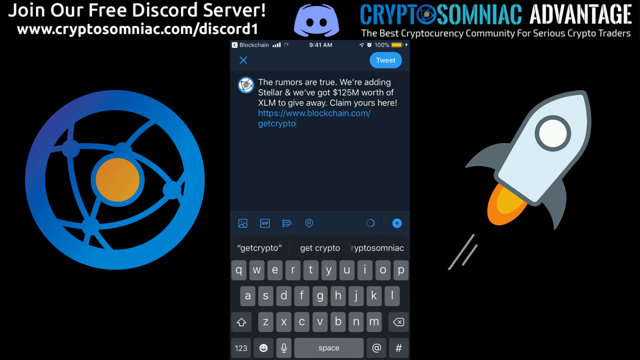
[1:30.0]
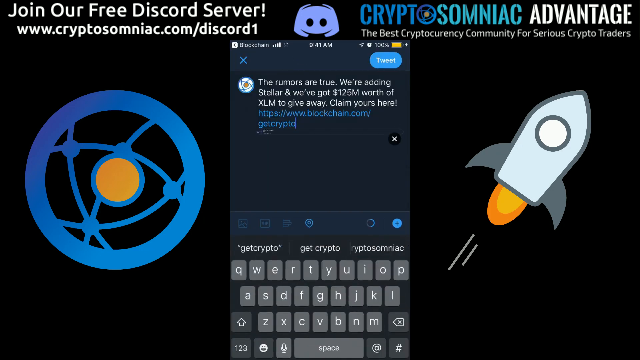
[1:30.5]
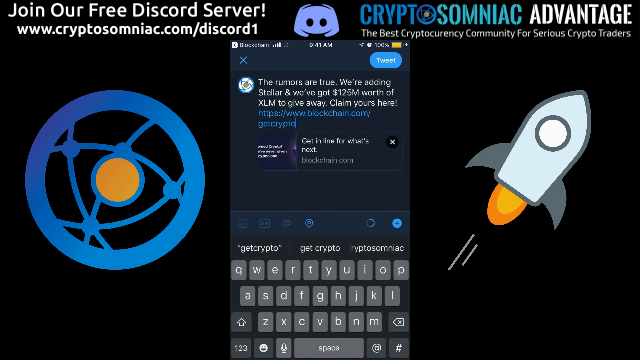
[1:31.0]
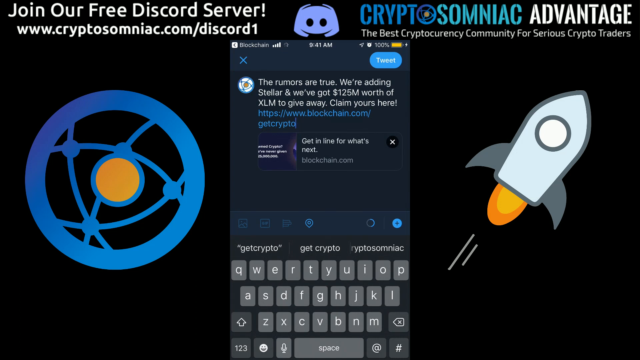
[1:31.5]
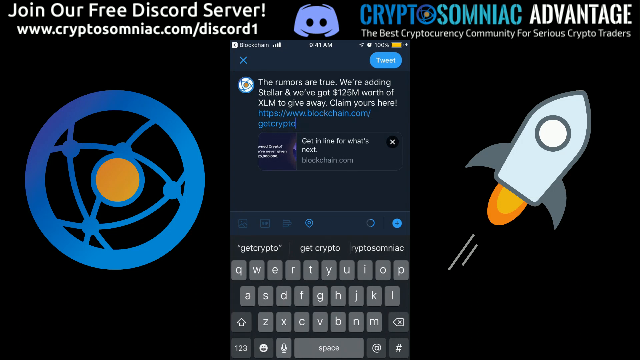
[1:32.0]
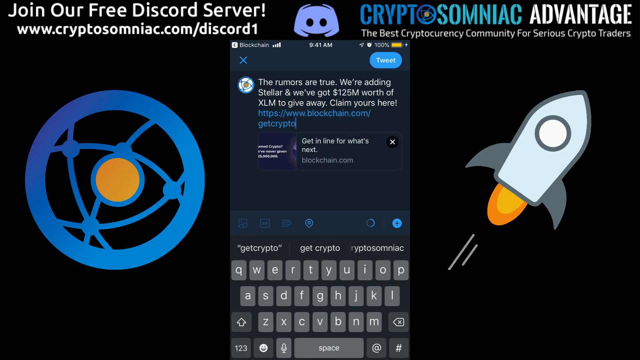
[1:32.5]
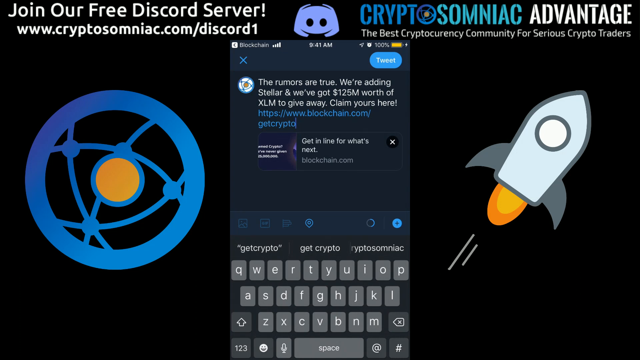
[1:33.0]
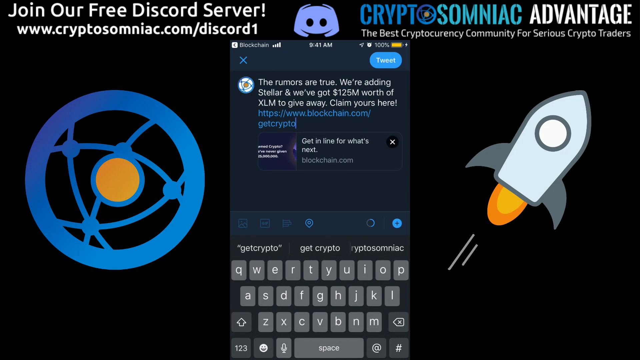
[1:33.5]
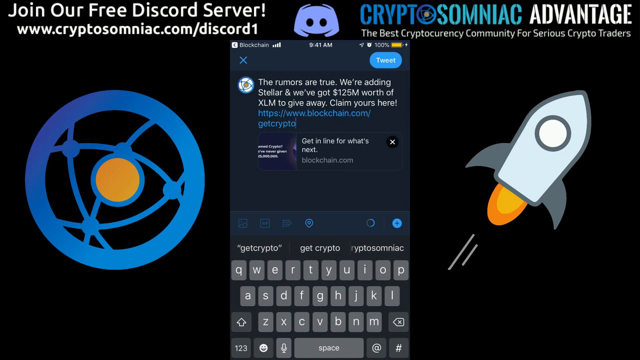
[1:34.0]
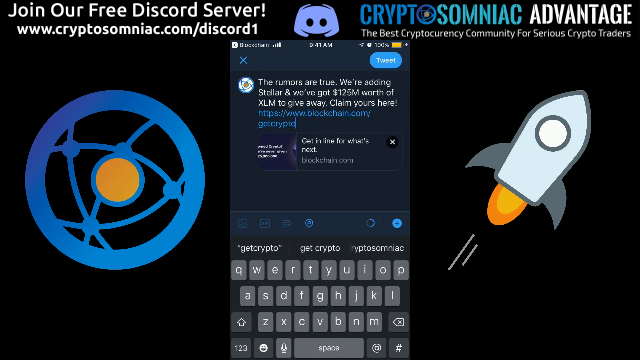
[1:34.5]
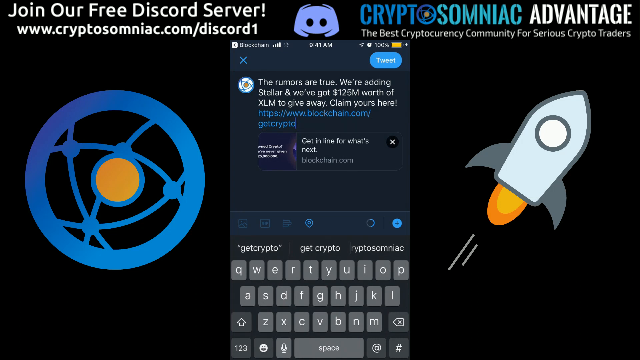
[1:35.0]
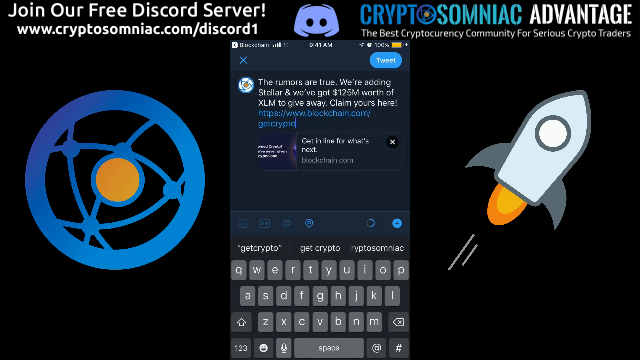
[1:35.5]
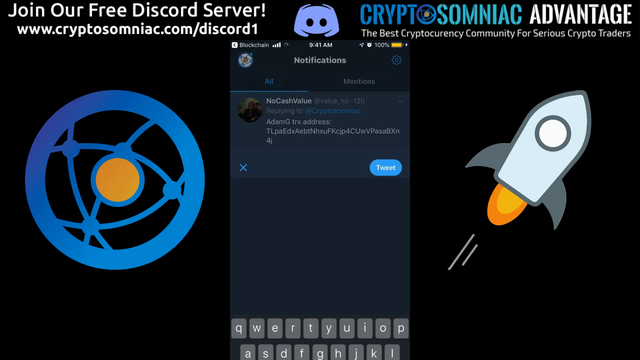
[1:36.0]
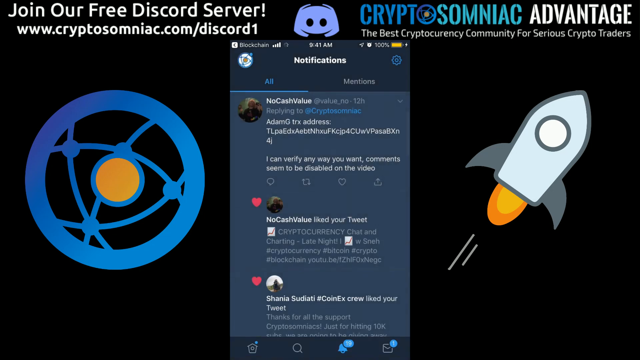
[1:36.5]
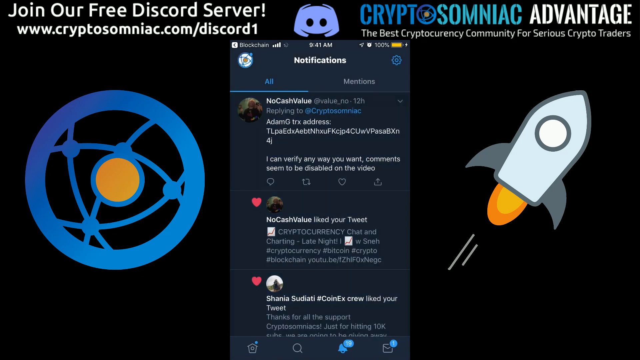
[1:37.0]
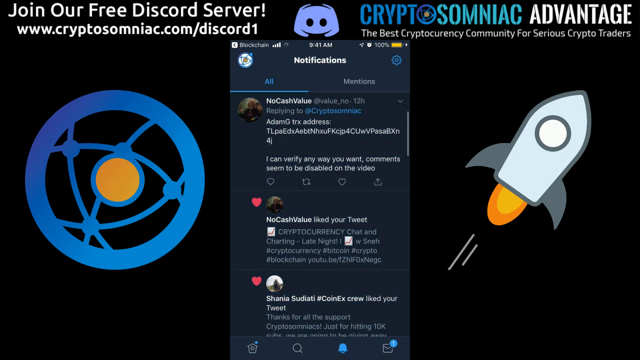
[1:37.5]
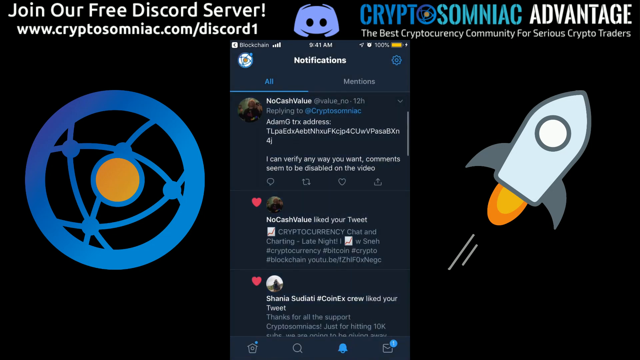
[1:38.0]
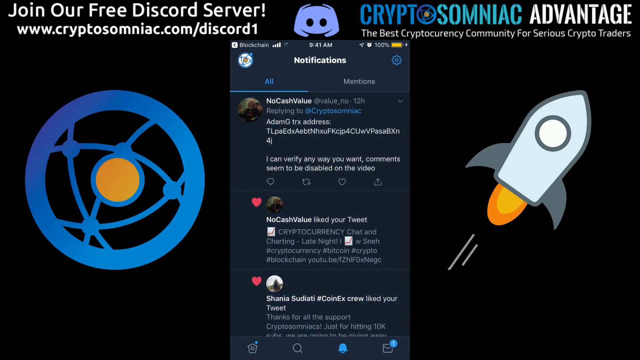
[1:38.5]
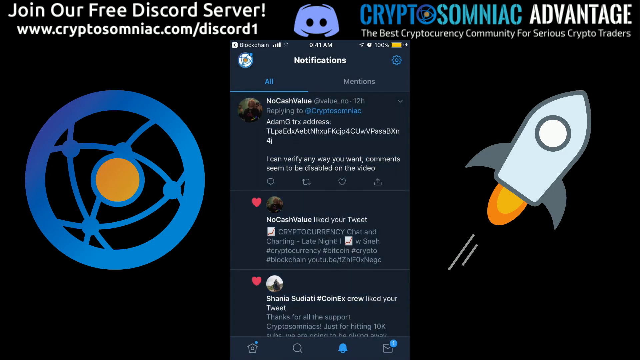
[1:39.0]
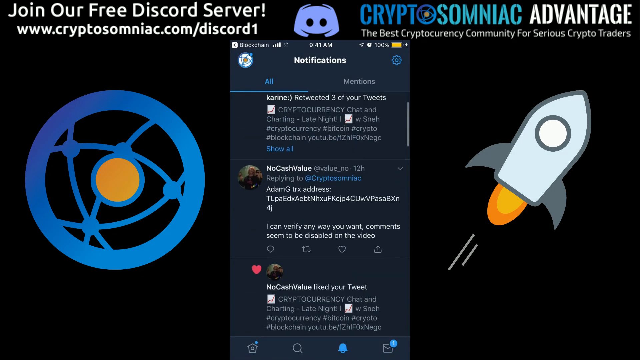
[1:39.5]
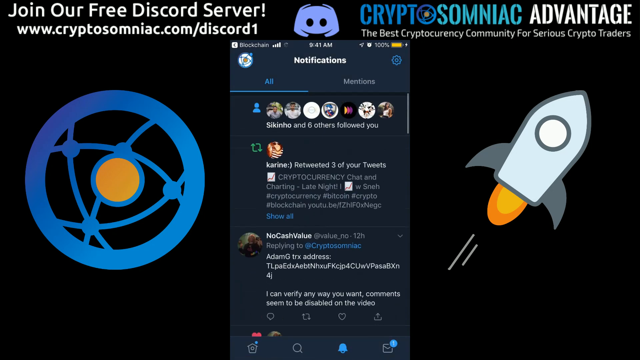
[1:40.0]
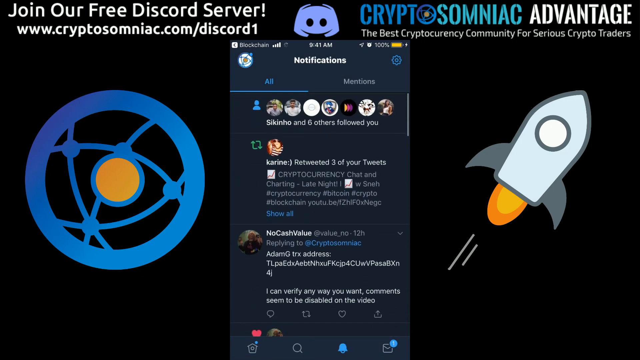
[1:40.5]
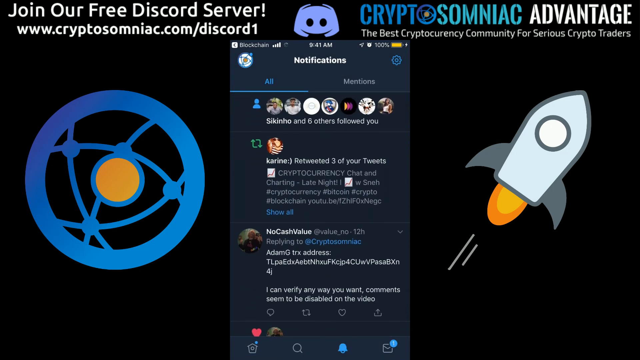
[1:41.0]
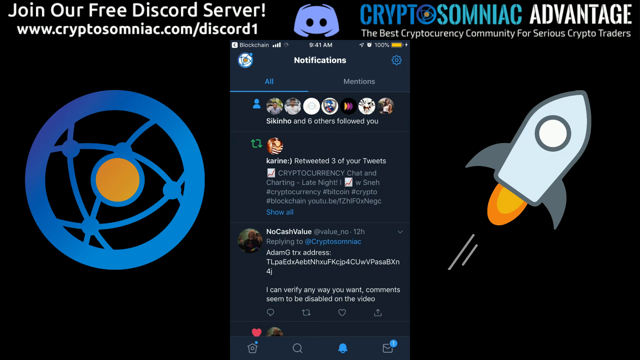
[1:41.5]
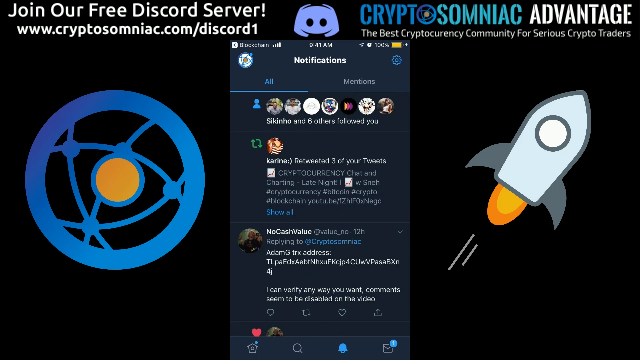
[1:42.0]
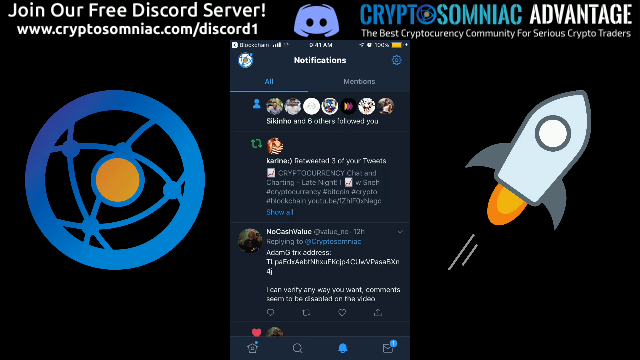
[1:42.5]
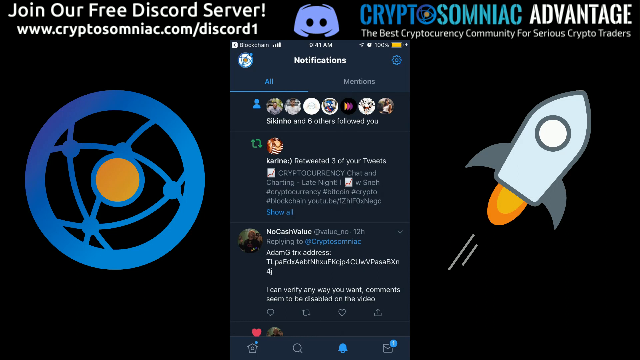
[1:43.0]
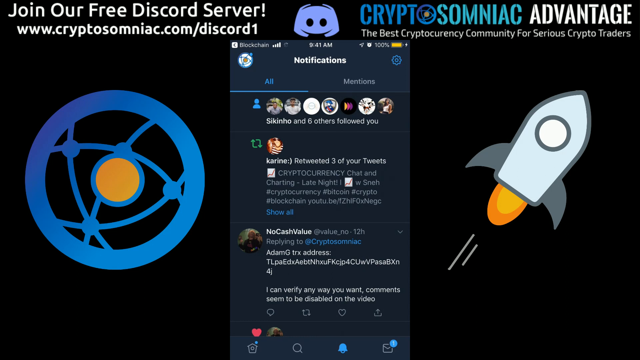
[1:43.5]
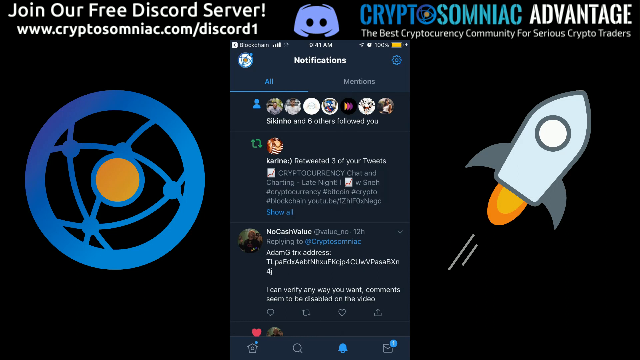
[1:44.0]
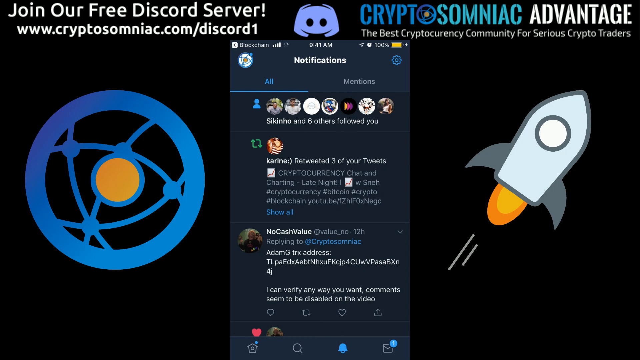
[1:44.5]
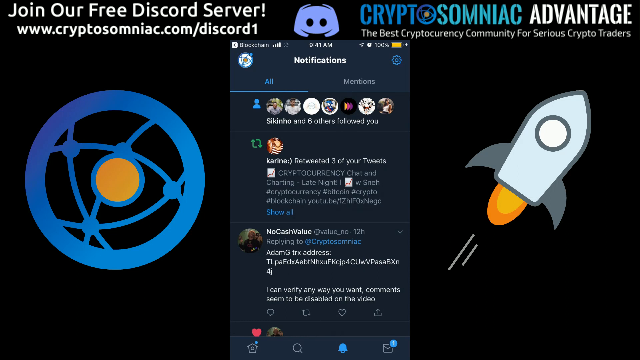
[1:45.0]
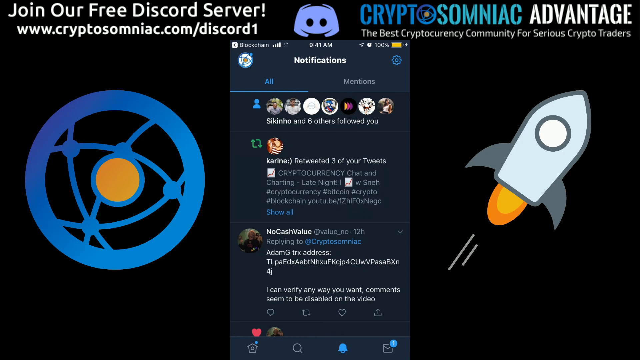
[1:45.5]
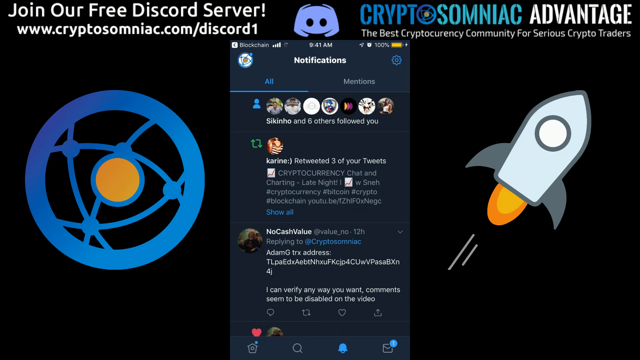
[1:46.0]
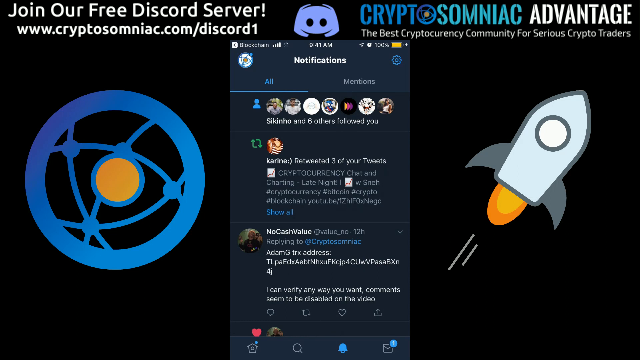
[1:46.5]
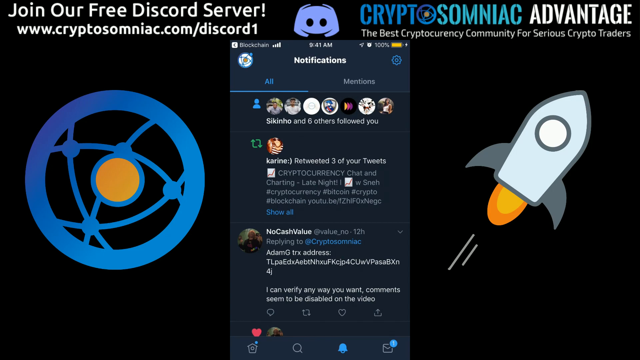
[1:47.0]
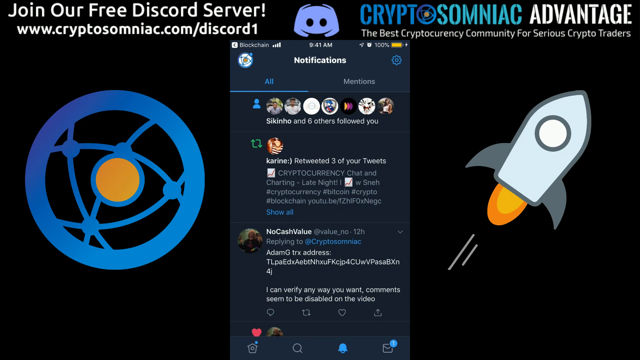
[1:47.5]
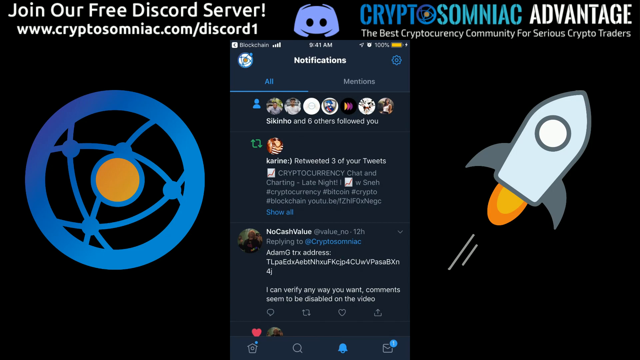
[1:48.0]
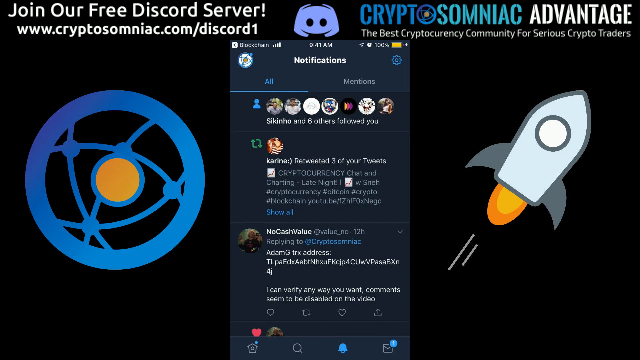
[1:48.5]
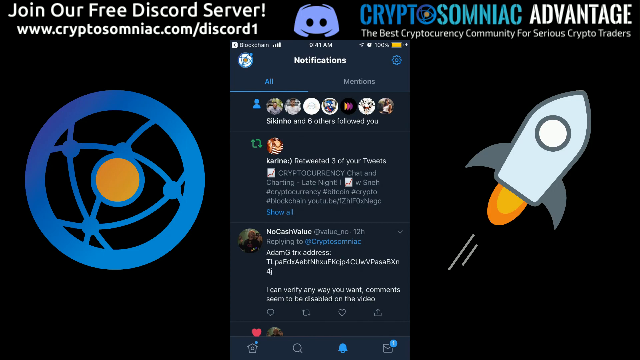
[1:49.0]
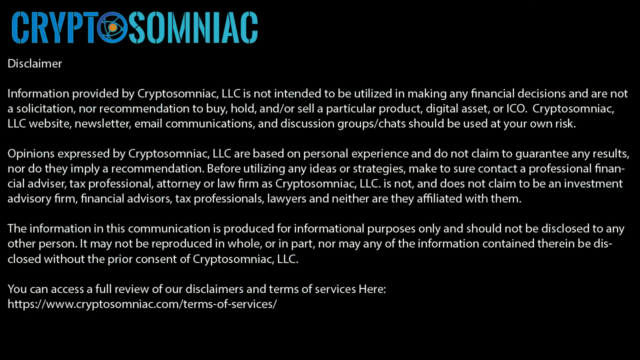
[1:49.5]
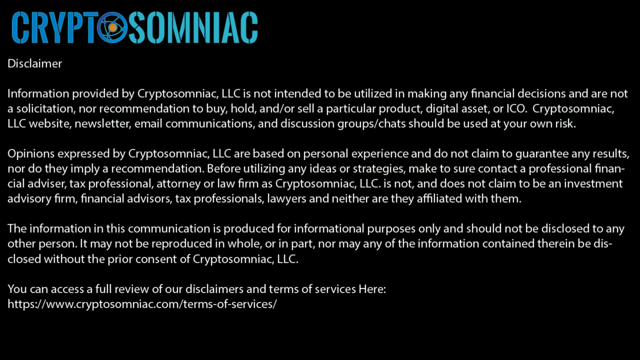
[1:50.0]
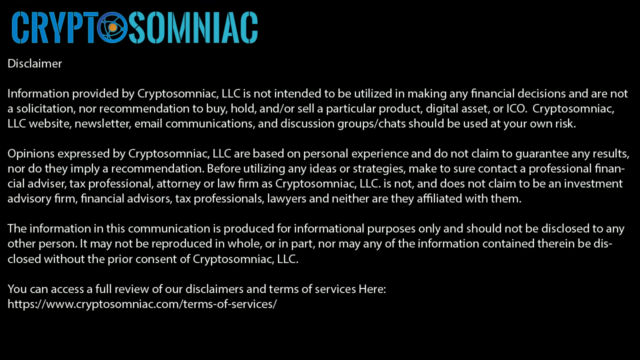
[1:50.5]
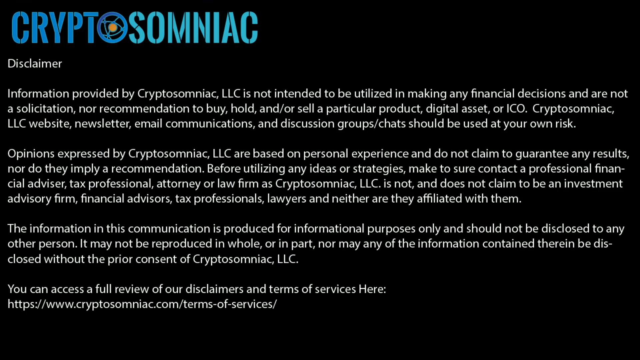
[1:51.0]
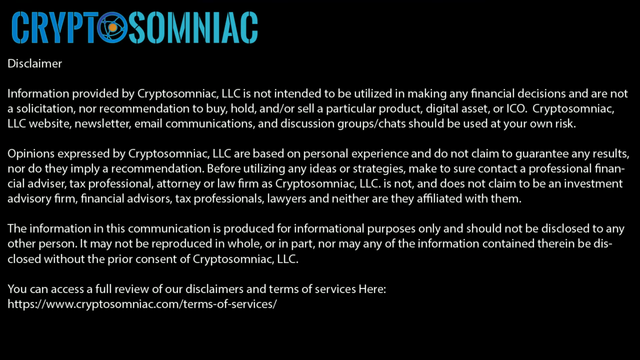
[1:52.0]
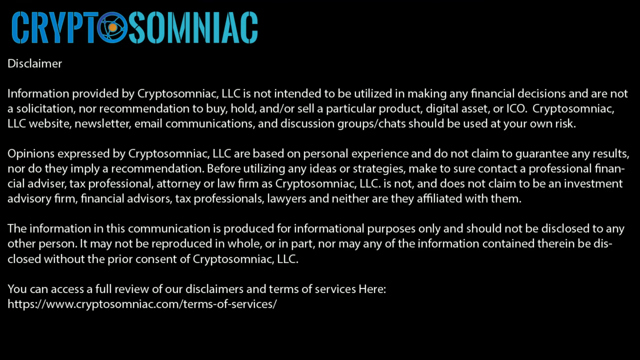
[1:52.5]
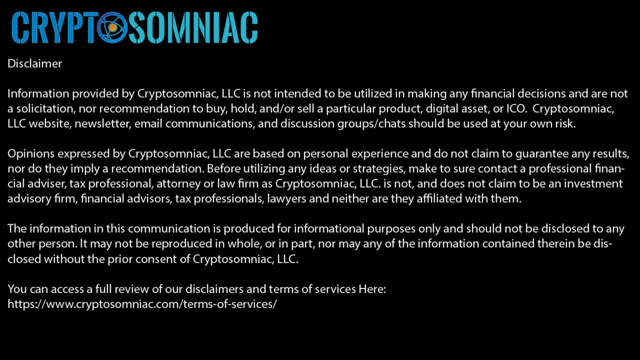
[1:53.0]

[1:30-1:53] A black background shows "join our free Discord server" from Cryptosomniac Advantage. The O logo is still there, the app menu is still in the middle, and the rocket ship is still on the right. The Twitter feed says "Rumors are true, we're adding Stellar and we've got 125 million worth of XLM to give away, claim yours here." Then a Bitcoin plug appears, followed by the website Blockchain.com and a reference to crypto. The screen states "Get in line for what's next." Finally, a disclaimer states that Cryptosomniac is not a financial advising company, a lawyer or law firm, a tax professional, or an investment firm and does not claim to be; that clients should obtain that information from a professional; that results are not guaranteed; and that the opinions expressed are based only on personal experience.